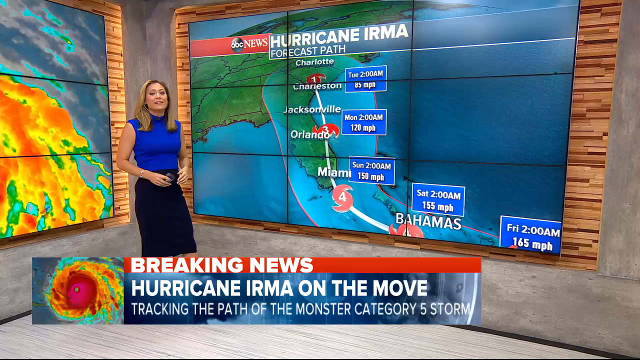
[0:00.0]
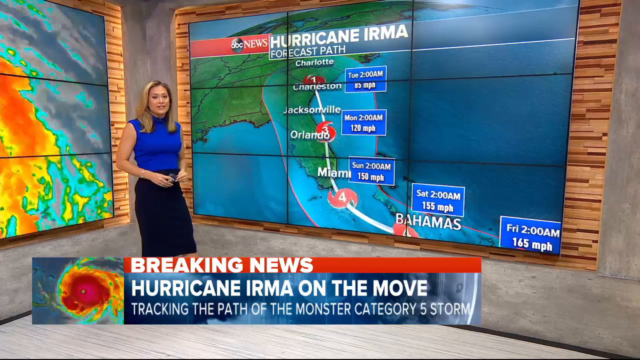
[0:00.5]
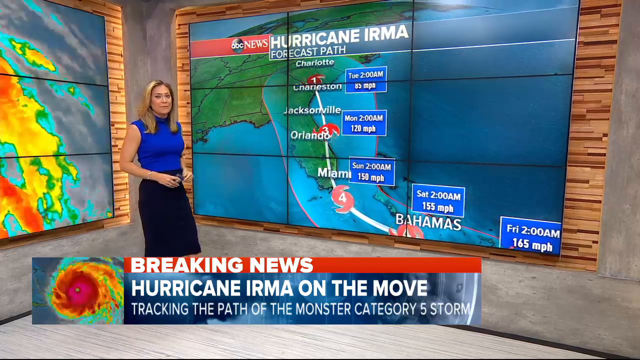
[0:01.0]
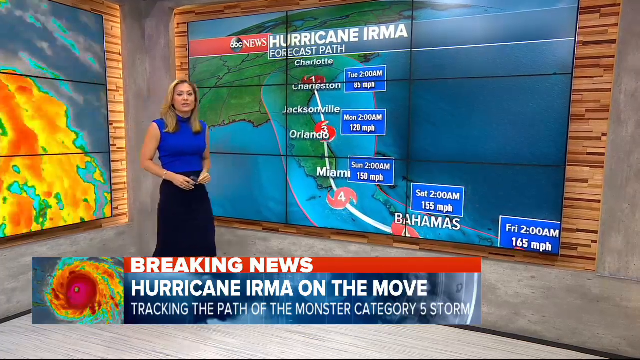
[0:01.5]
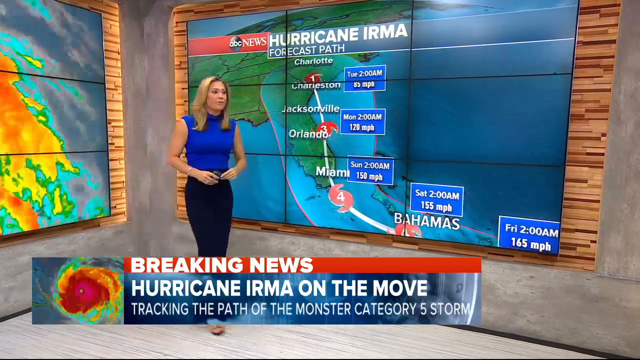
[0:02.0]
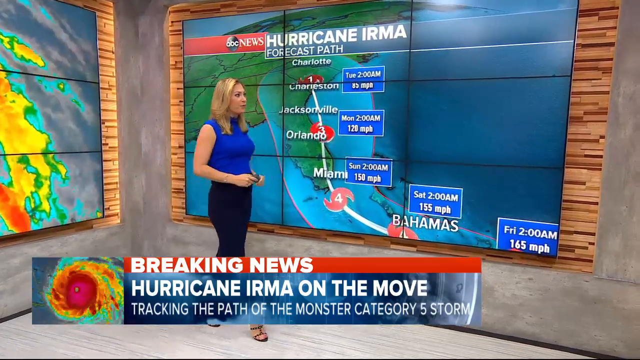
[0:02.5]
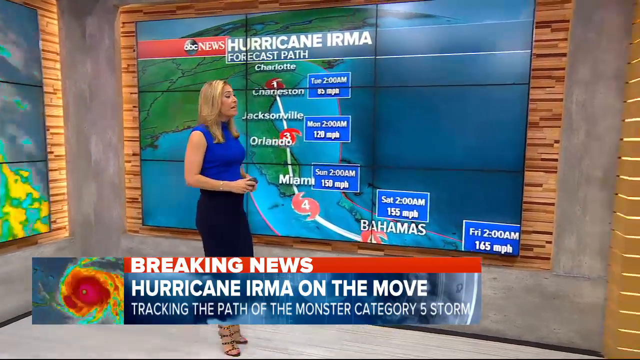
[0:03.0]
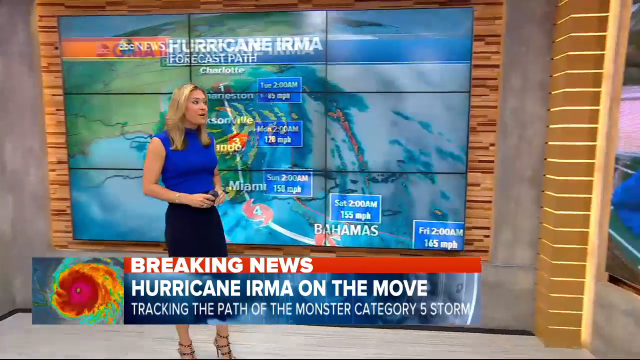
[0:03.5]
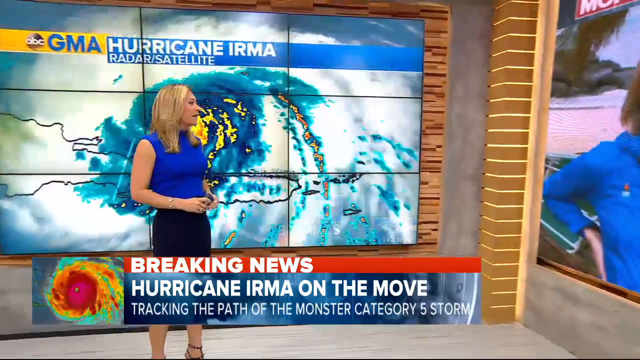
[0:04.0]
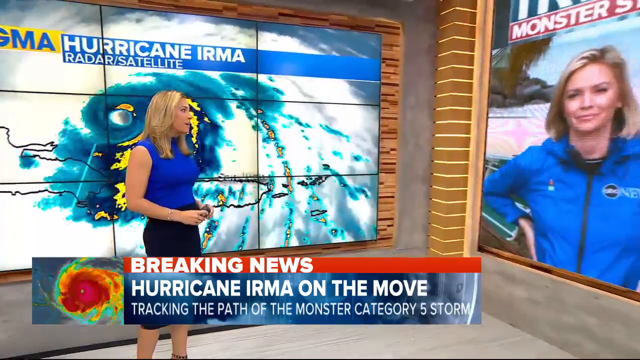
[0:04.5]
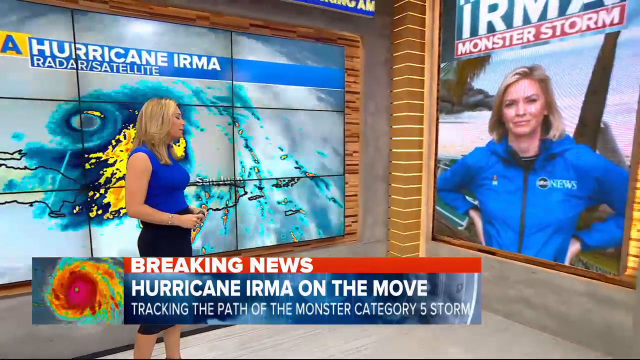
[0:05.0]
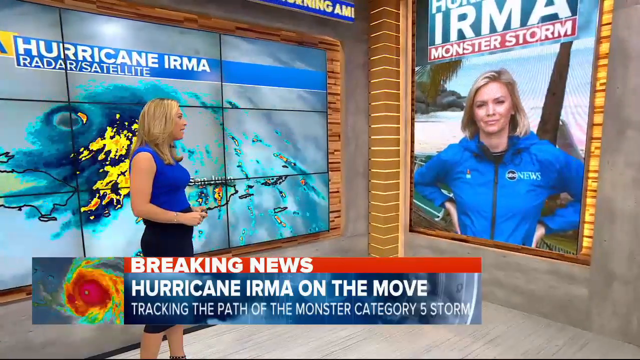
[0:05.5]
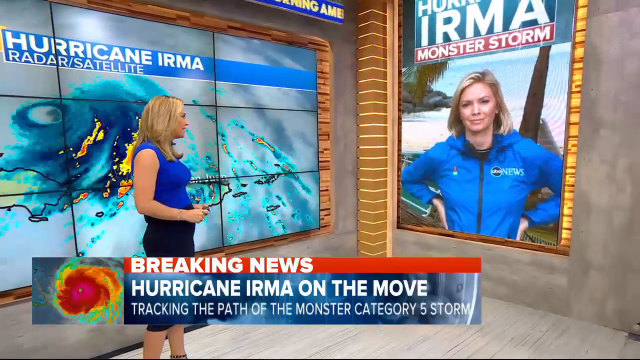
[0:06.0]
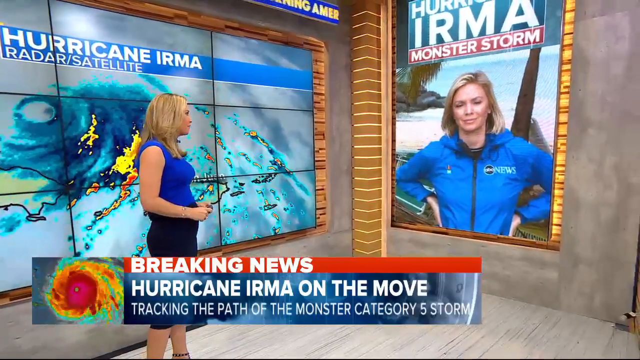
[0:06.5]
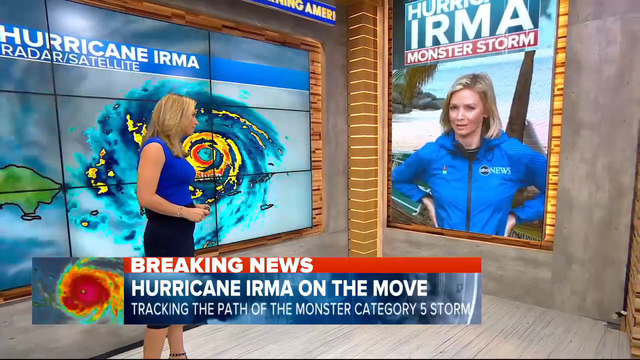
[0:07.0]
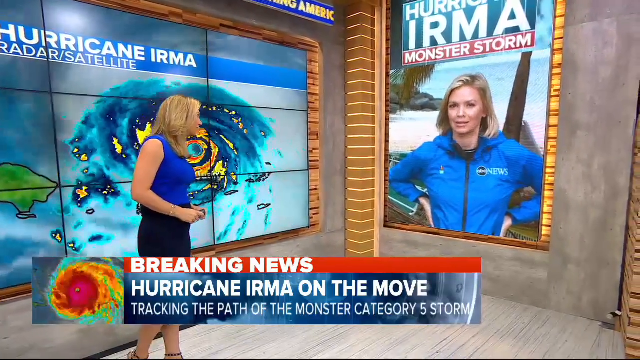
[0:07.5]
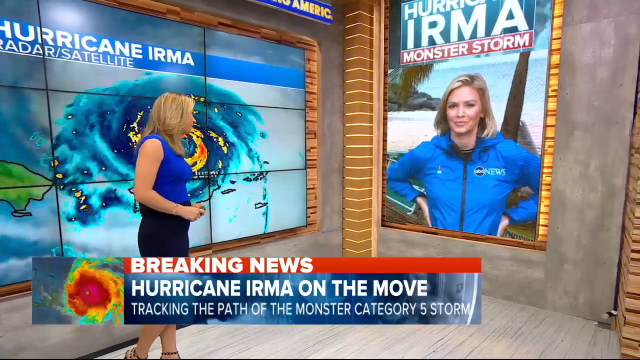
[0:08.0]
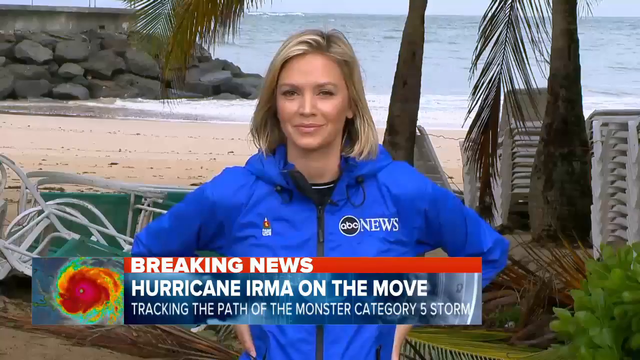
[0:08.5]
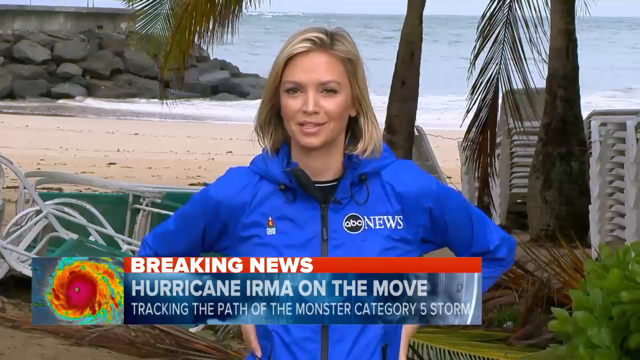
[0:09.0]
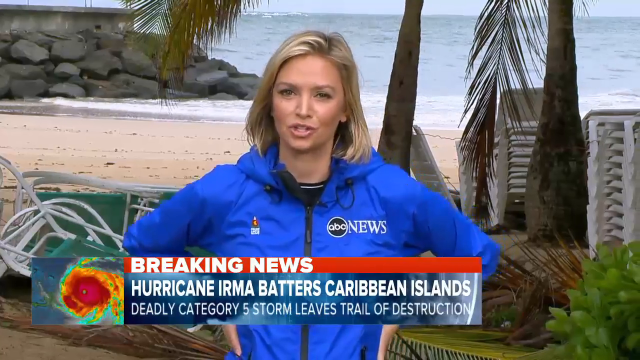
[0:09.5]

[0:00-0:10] This news clip about Hurricane Irma tracks the storm's path. A large screen shows the different areas or cities being affected, along with the storm pattern and the location of the eye of the storm. A woman stands inside a studio showing the path of Hurricane Irma, while there also appears to be another newscaster filming live on location. The woman on location stands at an ocean with her hands on her hips. She wears a close-fitted, long-sleeved bright blue jacket with the words "ABC News" on it; it appears to have a hood, a portion of which shows at the front. She has blonde hair with brownish roots, wears a good amount of makeup, and has on a light, maybe orangish pink lipstick. She and the woman in the studio communicate back and forth, comparing notes. On one of the studio screens, different cities in North Carolina that are affected are displayed.